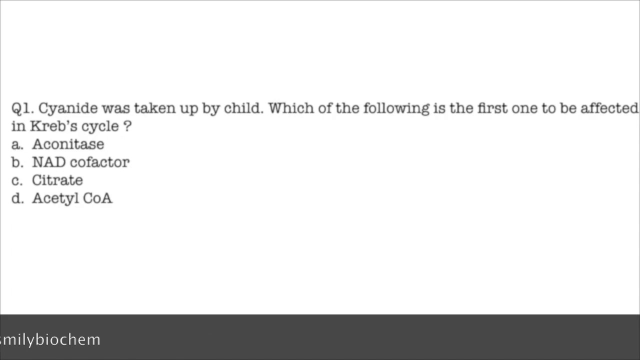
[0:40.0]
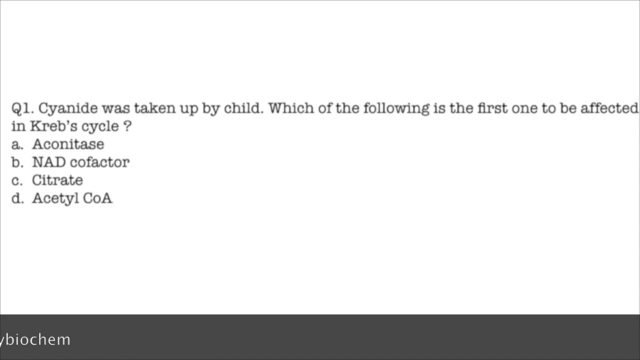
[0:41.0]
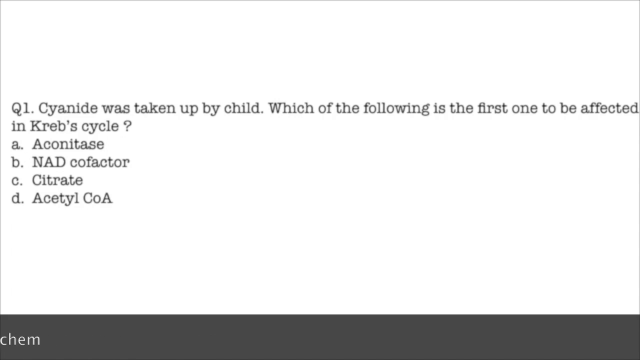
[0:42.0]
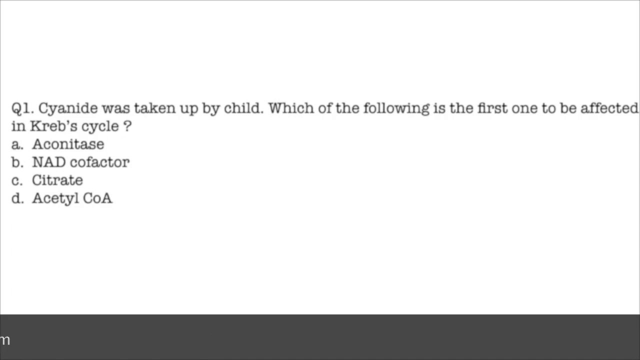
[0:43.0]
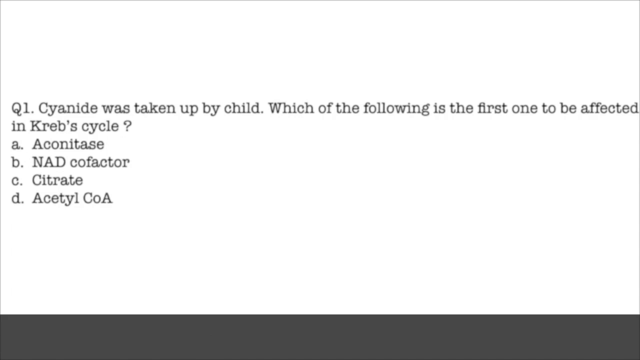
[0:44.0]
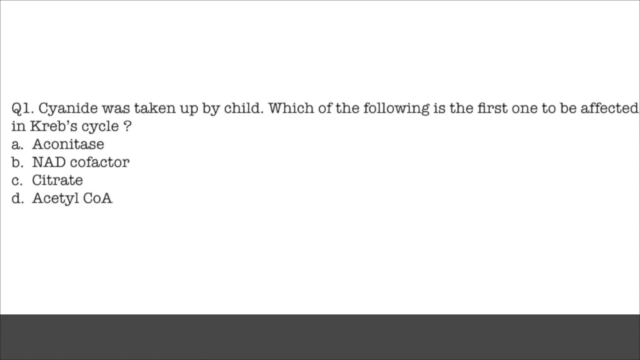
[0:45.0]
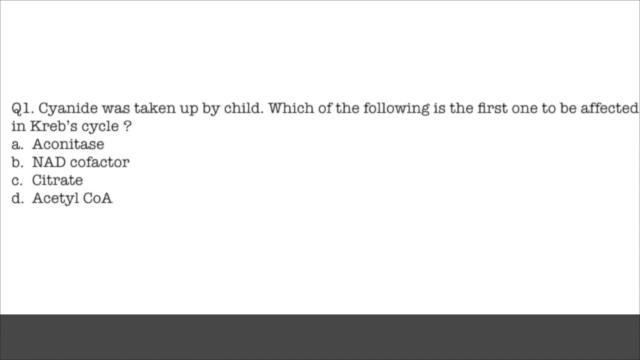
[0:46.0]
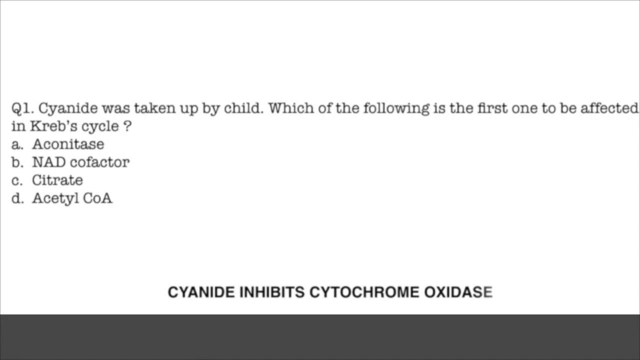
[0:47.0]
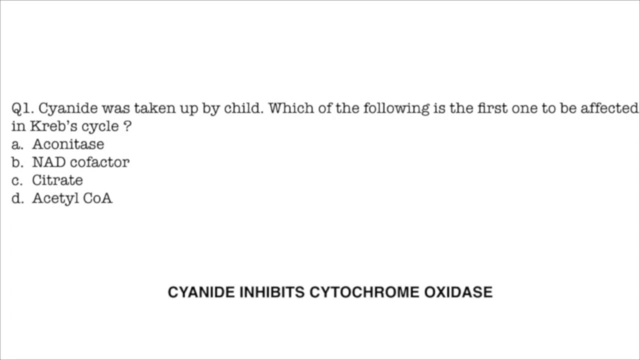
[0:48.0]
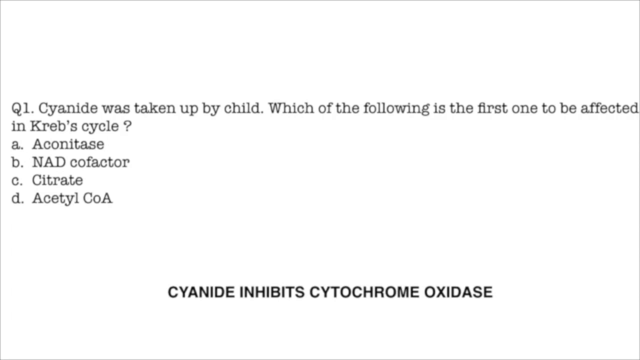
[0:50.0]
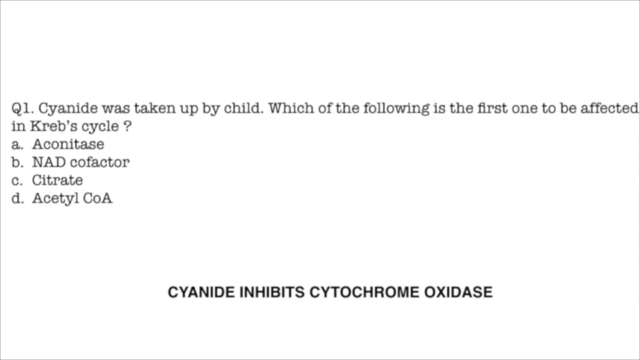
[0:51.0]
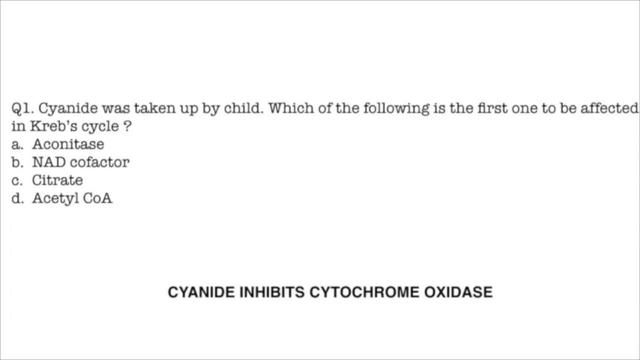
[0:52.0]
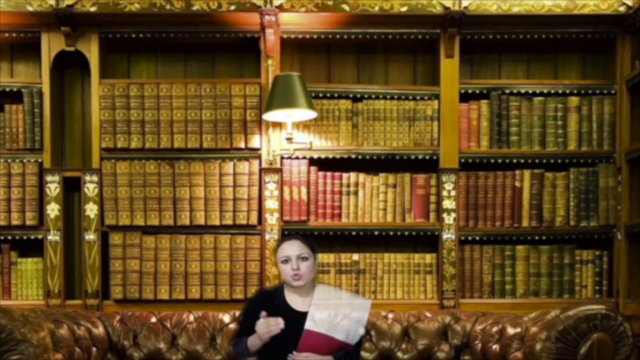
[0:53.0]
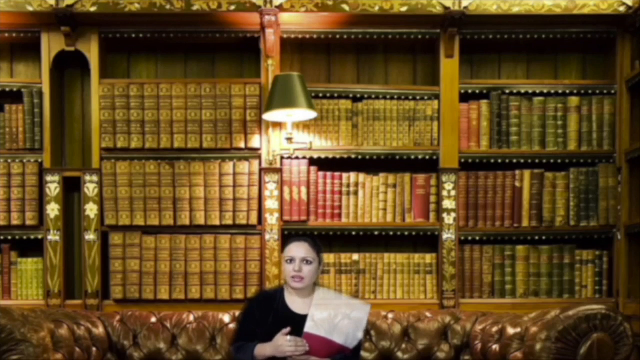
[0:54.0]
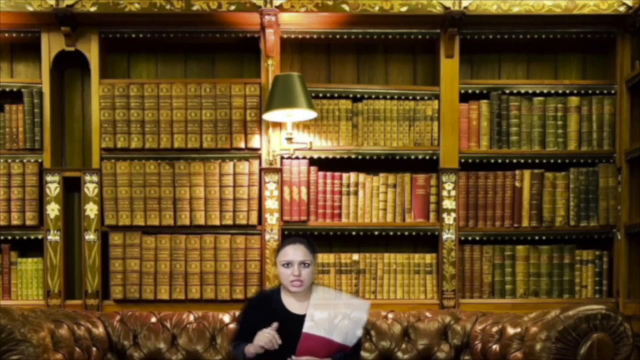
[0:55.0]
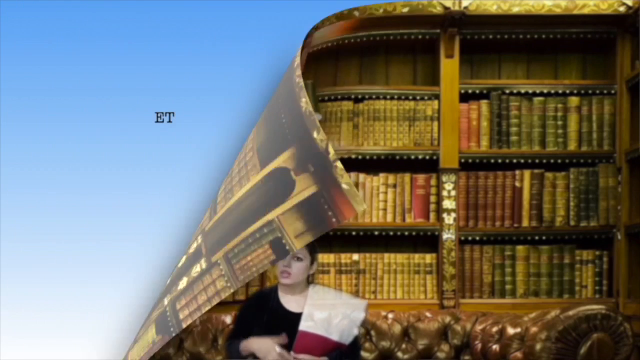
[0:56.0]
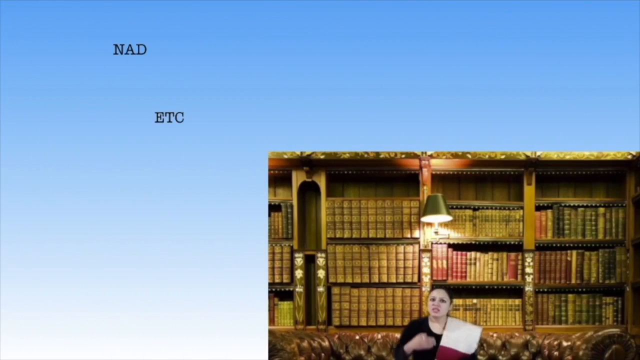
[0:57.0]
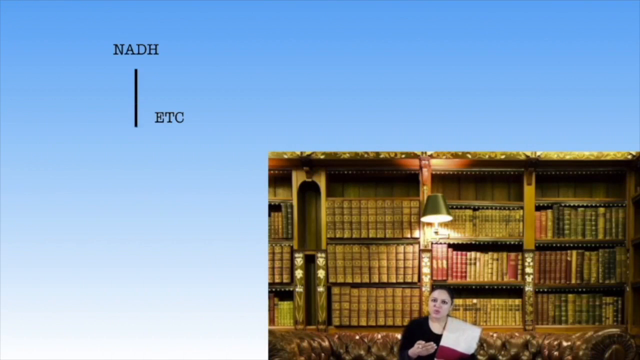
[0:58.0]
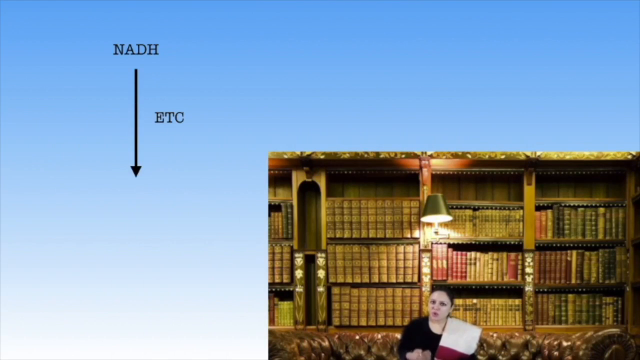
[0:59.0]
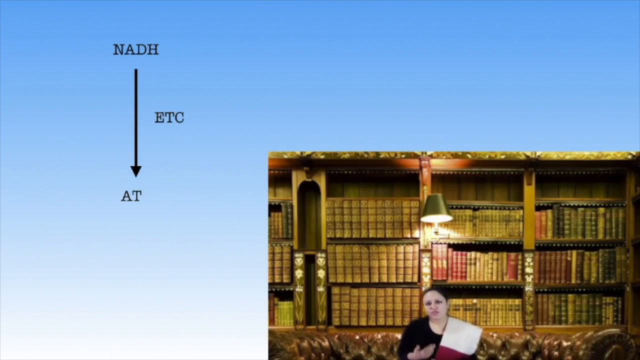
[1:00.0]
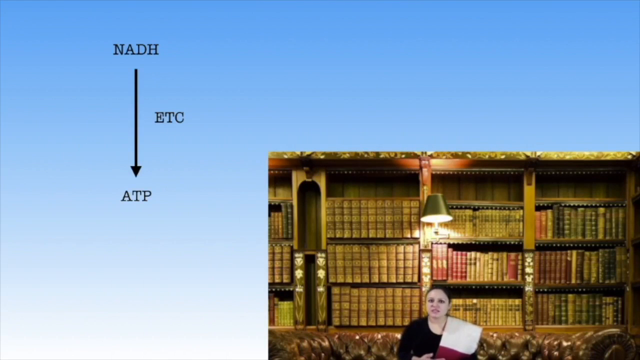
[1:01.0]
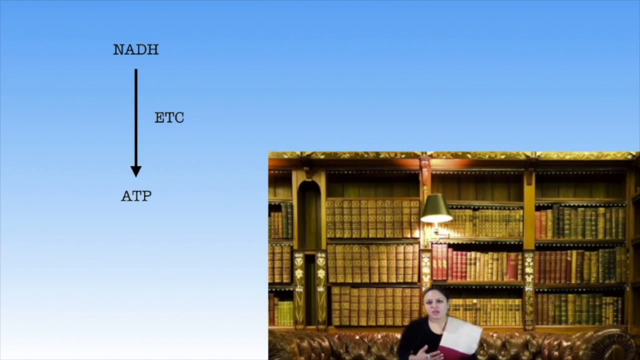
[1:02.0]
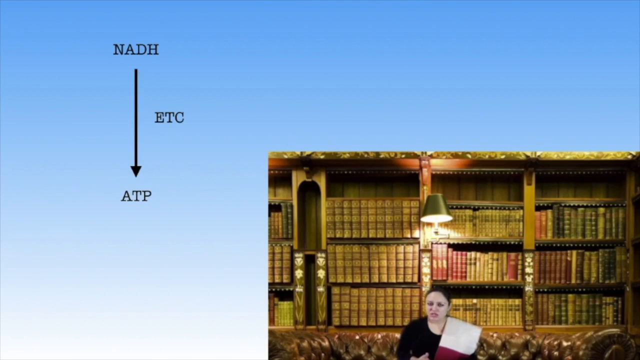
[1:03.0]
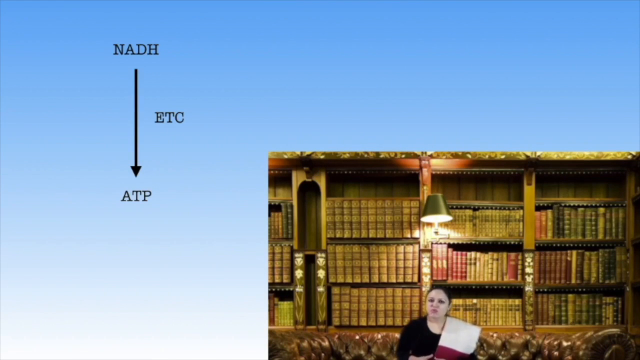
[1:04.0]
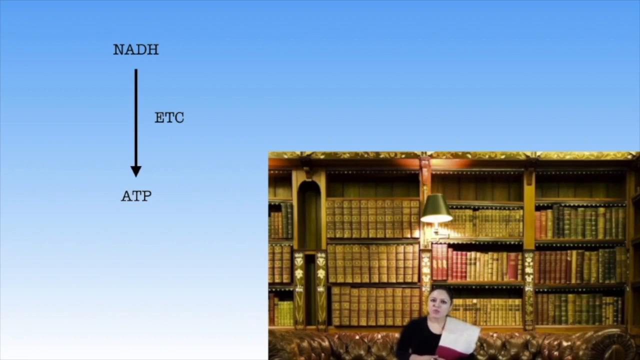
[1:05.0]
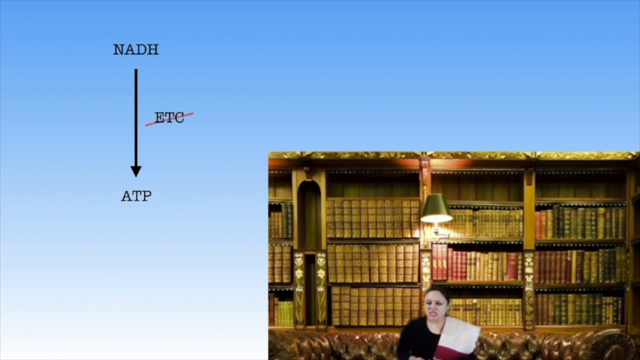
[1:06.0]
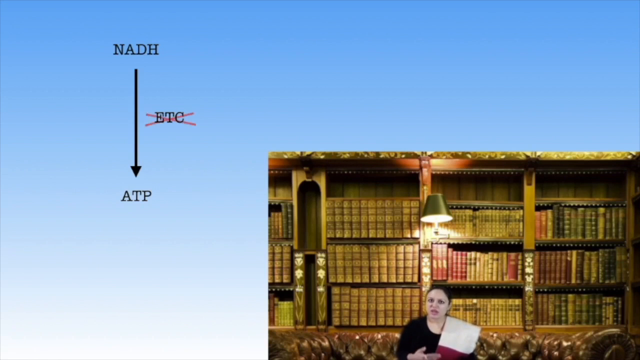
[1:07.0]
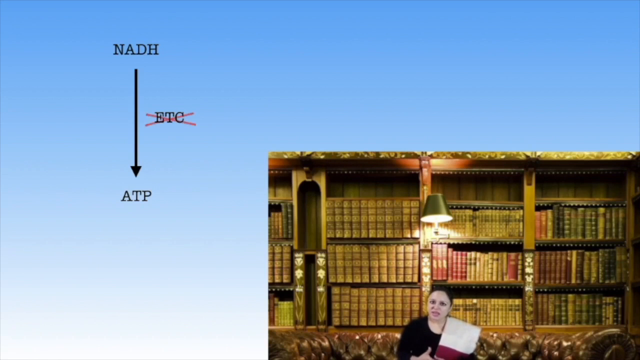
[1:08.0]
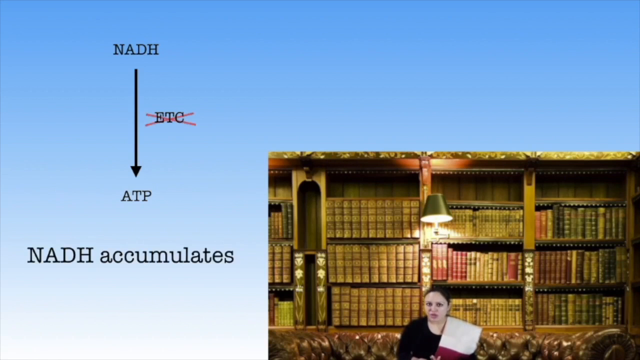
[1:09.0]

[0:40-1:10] A question appears on a solid white screen: "Q1, cyanide was taken up by a child. Which of the following is the first to be affected in the Krebs cycle?" The answers are A, Aconitase; B, NAD cofactor; C, citrate; and D, acetyl-CoA. As the video plays on, the doctor pops up at the bottom of the screen. Her image then appears on the screen, showing the woman sitting on the couch with a sash over her shoulder and a large collection of books behind her.